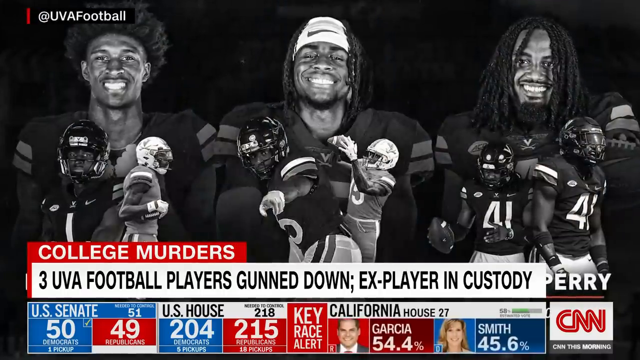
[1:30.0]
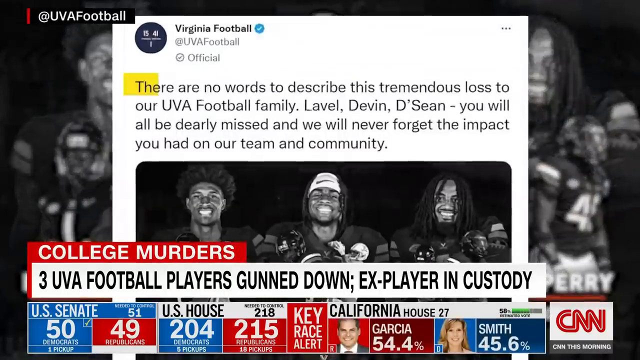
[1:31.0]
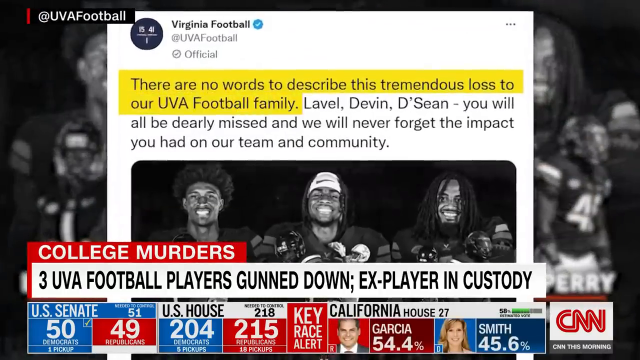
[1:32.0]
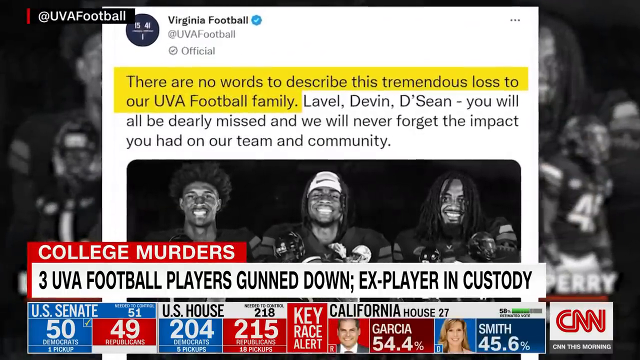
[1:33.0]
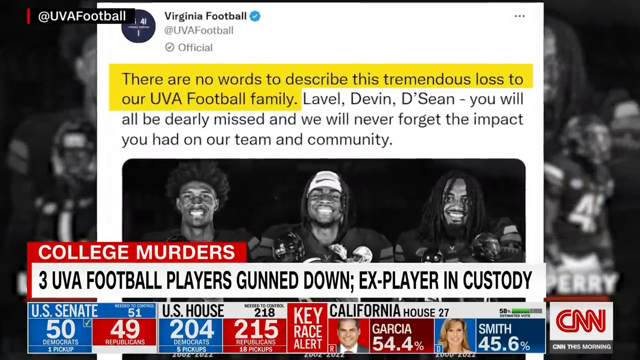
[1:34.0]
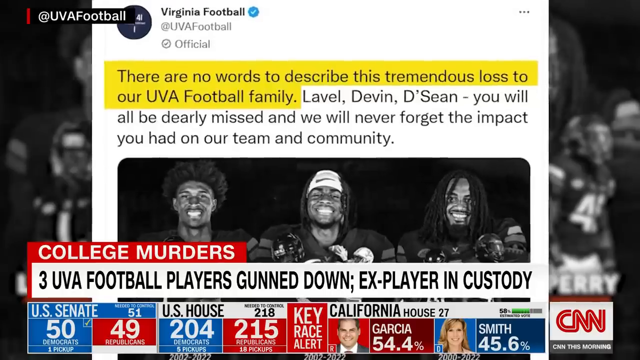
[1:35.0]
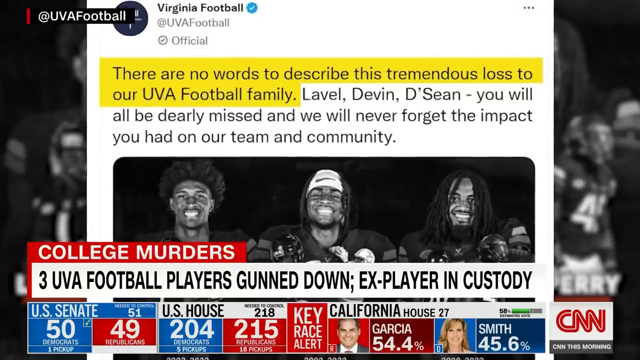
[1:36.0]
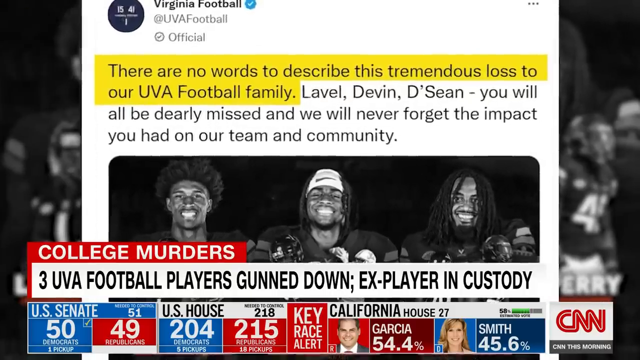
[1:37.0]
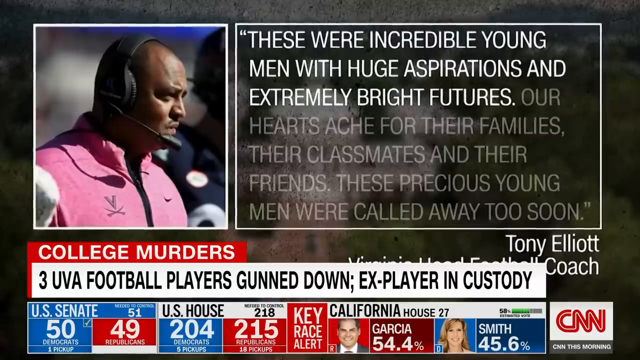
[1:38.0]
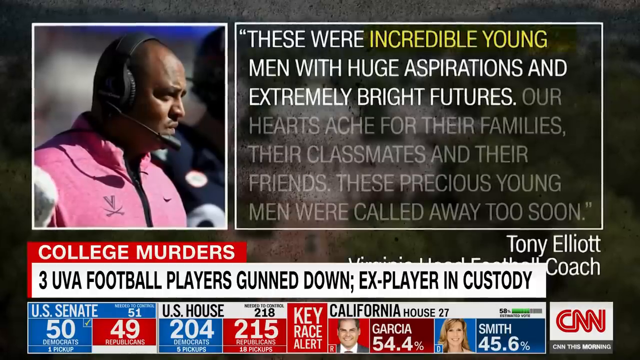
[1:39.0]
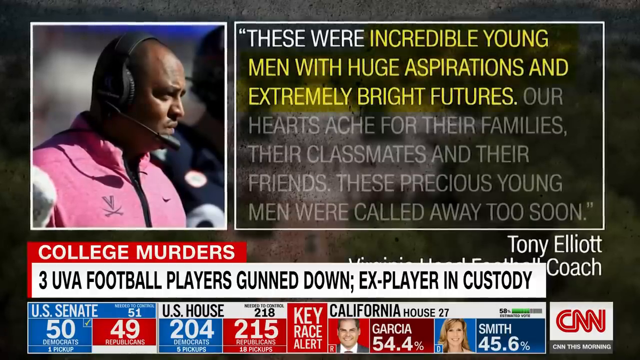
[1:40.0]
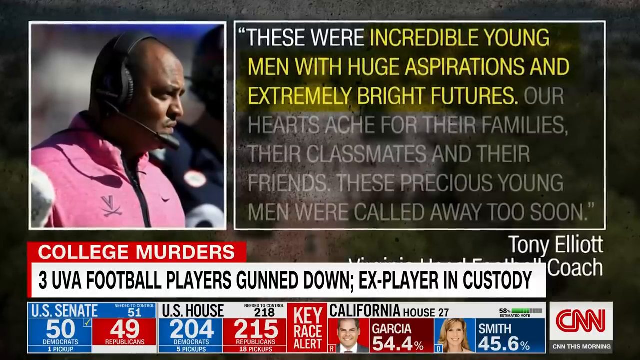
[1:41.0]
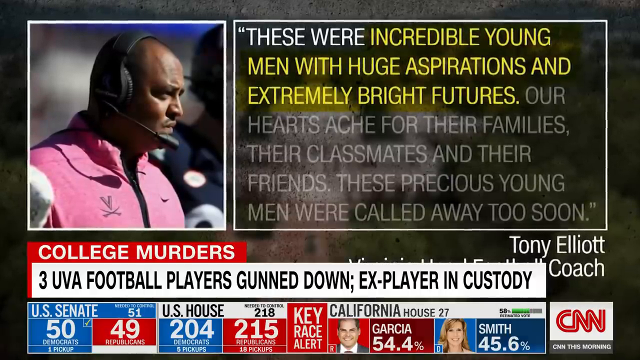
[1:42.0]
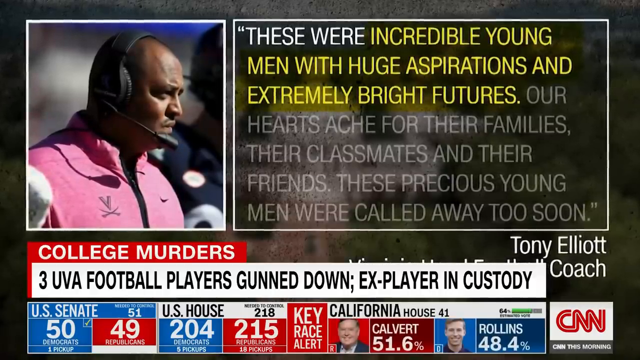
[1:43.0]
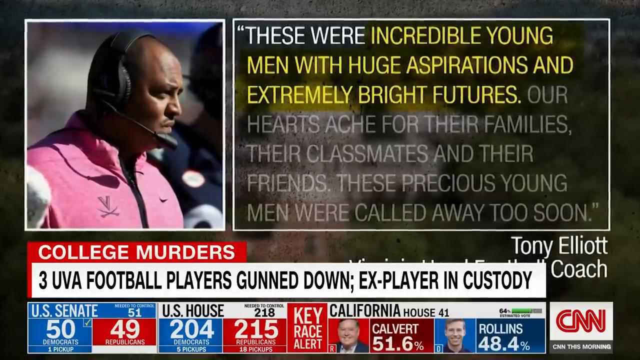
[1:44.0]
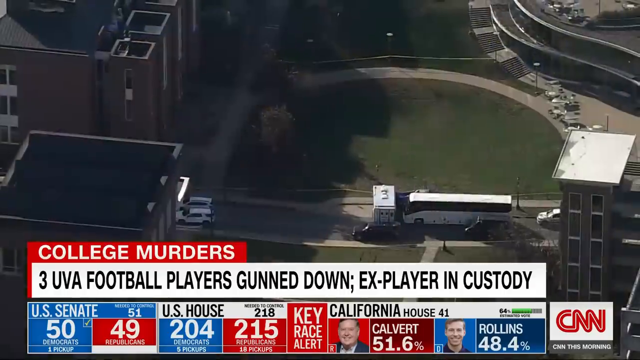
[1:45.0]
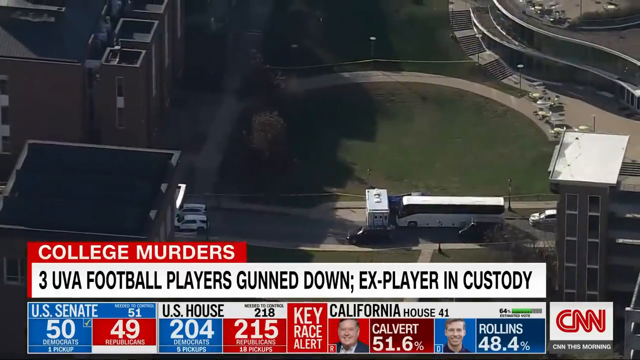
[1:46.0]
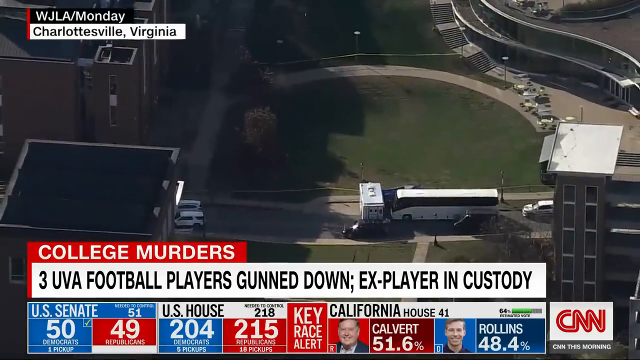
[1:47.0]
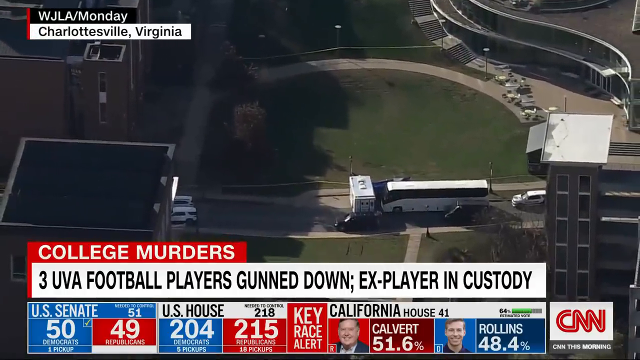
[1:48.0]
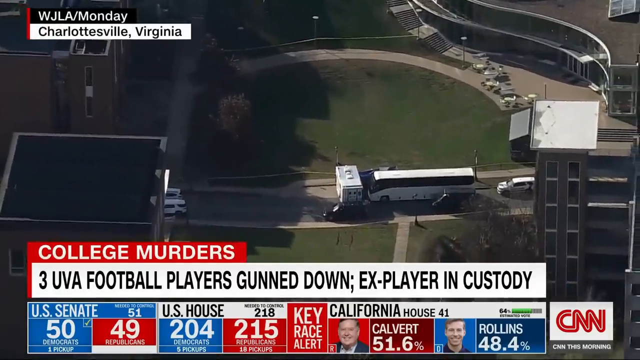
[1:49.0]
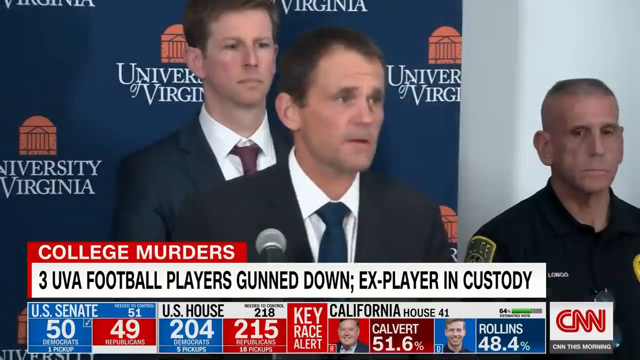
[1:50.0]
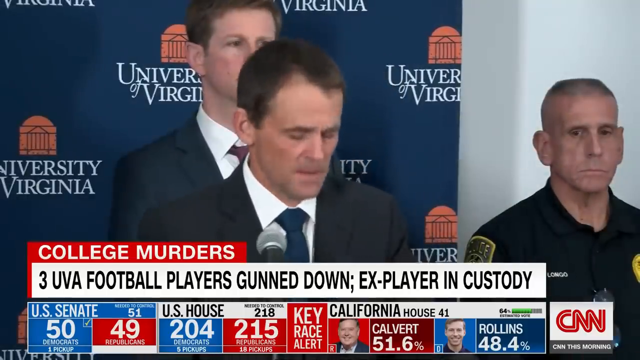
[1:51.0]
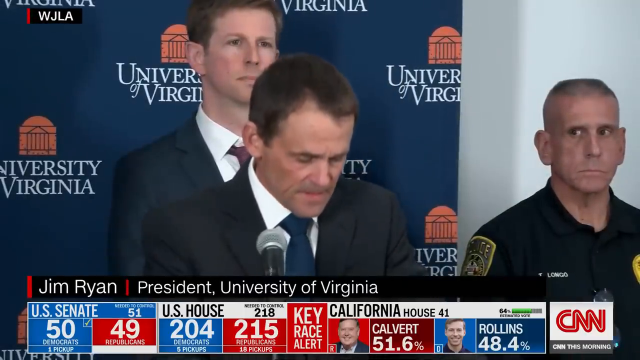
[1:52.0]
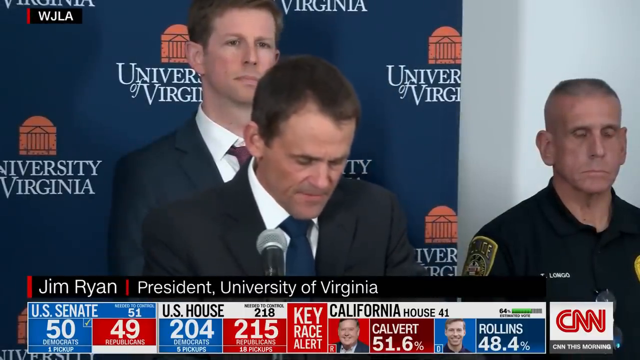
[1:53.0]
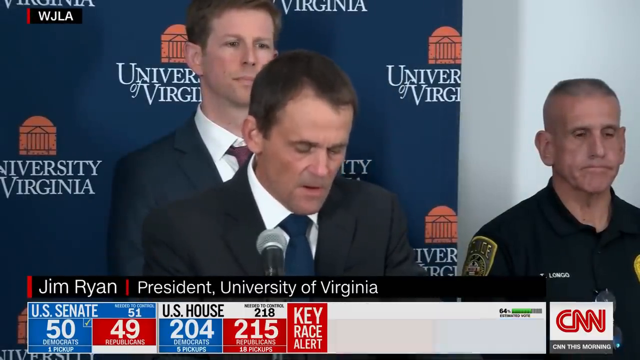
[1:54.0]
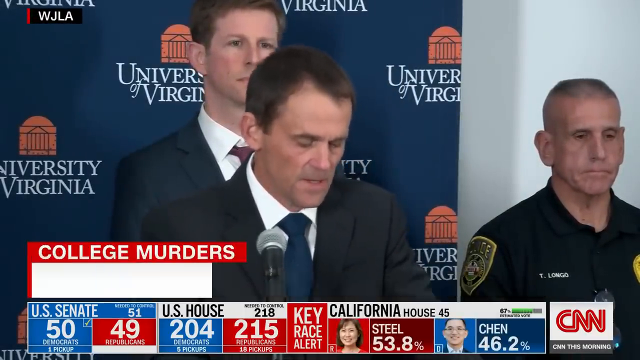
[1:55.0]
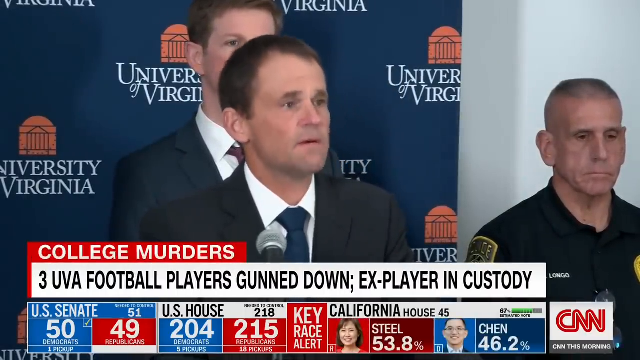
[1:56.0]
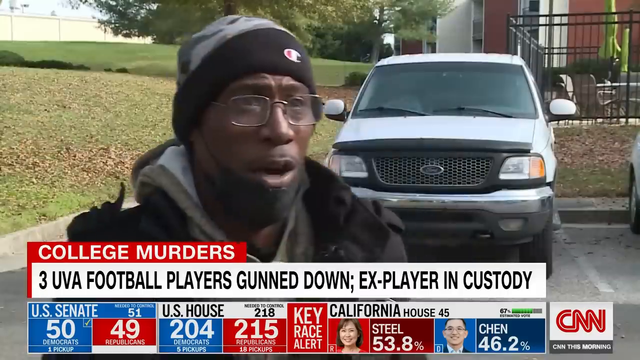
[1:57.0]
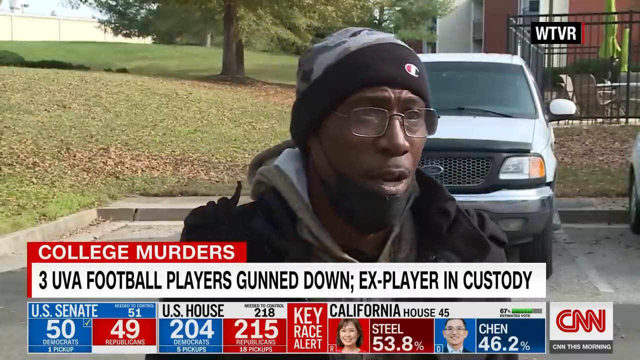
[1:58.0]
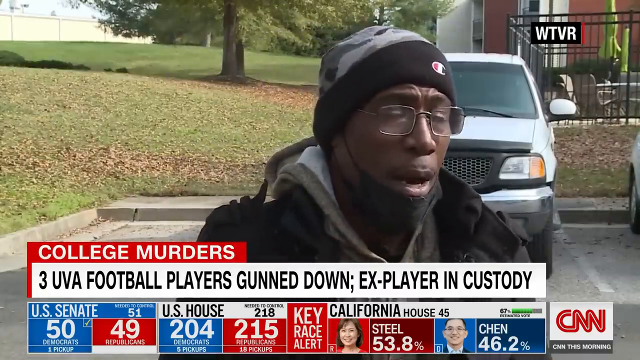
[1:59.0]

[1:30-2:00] The CNN news story is titled "College Murders," with the text "3 UVA football players gunned down, ex-player in custody." A screenshot of a message posted on Twitter by Virginia football appears, with some of the text highlighted in yellow: "there are no words to describe this tremendous loss to our UVA football family." The message continues: "Lavelle, Devin and Deshaun you will all be dearly missed and we will never forget the impact you had on our team and community." Below it is a black-and-white photograph of the three players standing side by side in their team uniforms. Next comes a photograph of their coach, an African American man wearing a pink jacket and headphones with an attached microphone. Then a text box in white lettering shows a quote from the team's football coach, Tony Elliott: "These were incredible young men with huge aspirations and extremely bright futures. Our hearts ache for their families, their classmates, and their friends. These precious young men were called away too soon."